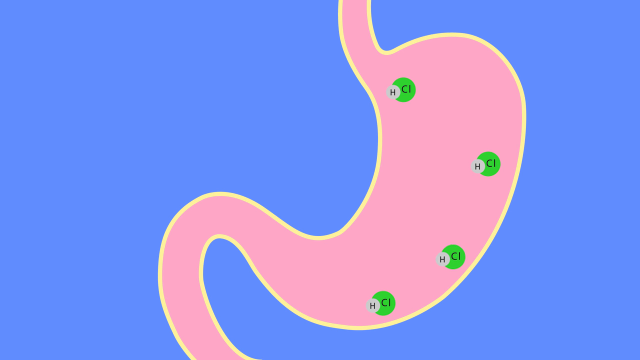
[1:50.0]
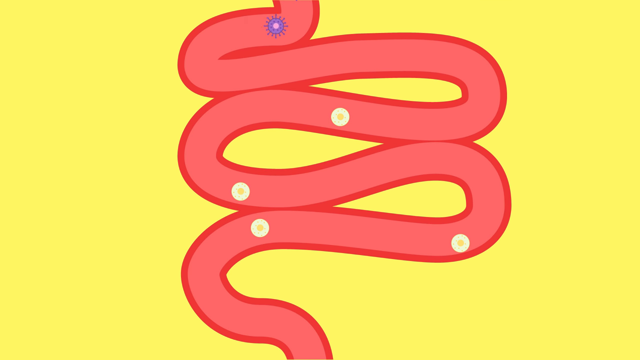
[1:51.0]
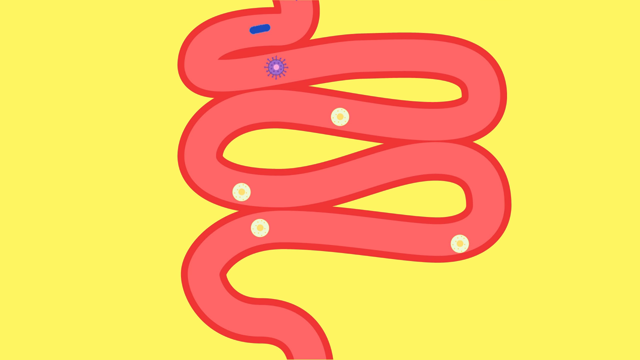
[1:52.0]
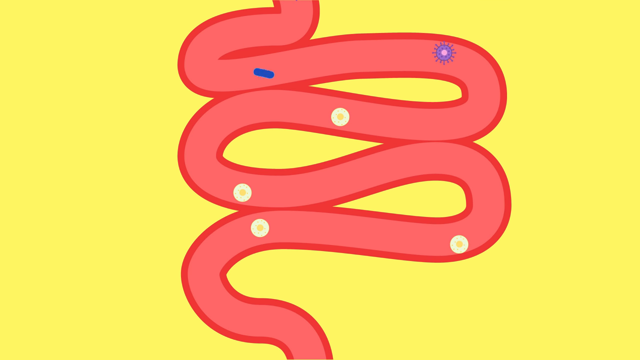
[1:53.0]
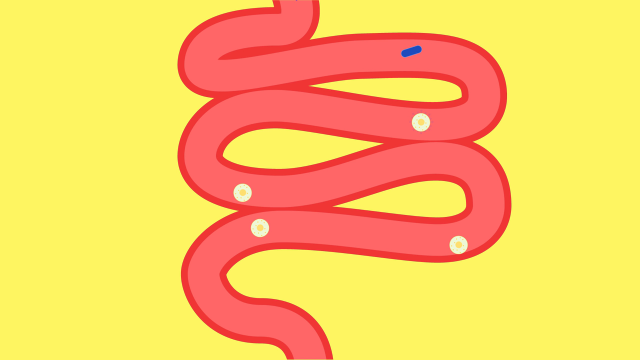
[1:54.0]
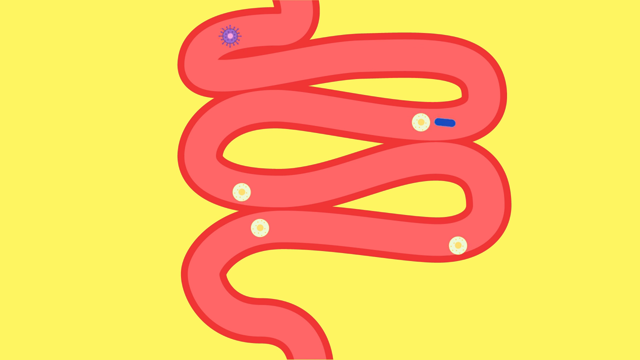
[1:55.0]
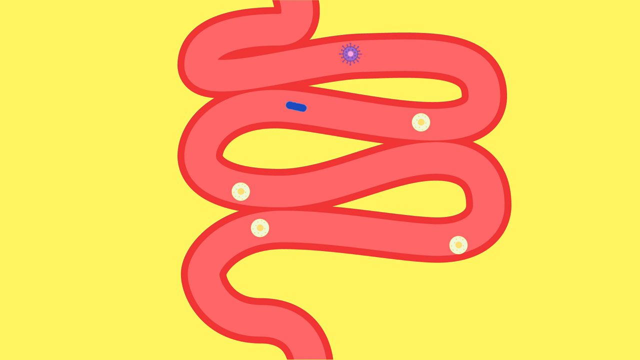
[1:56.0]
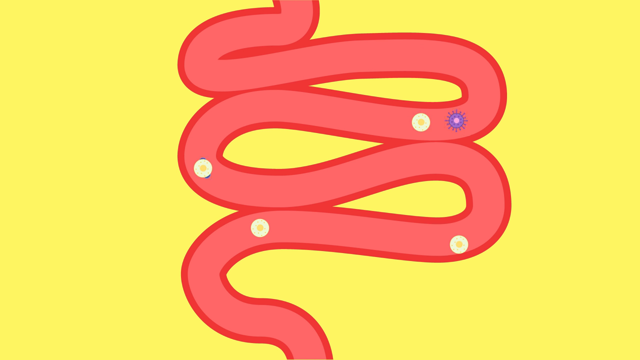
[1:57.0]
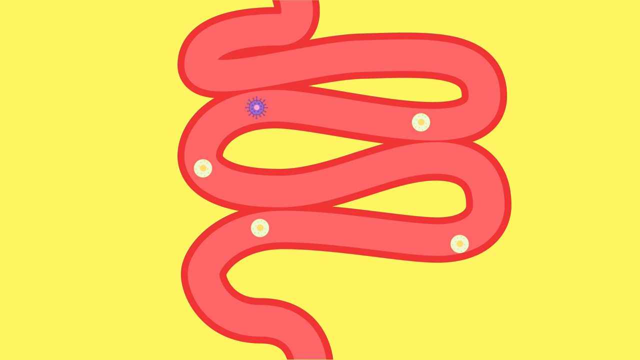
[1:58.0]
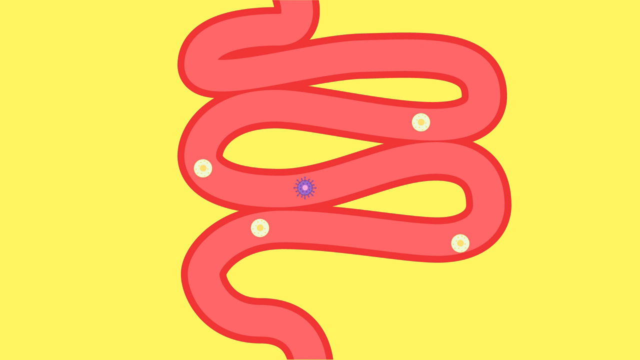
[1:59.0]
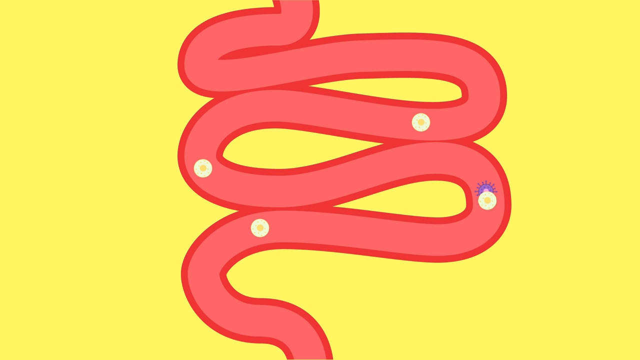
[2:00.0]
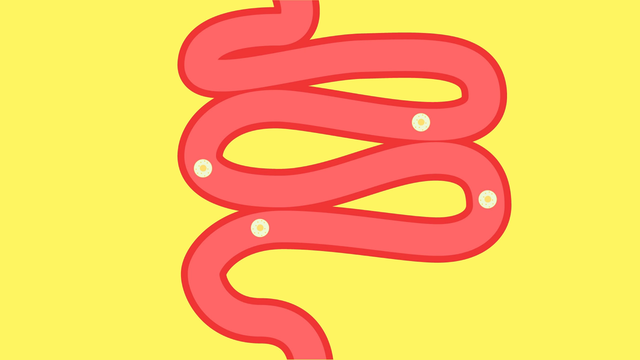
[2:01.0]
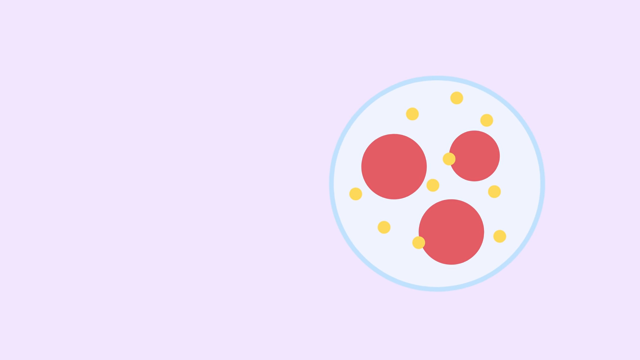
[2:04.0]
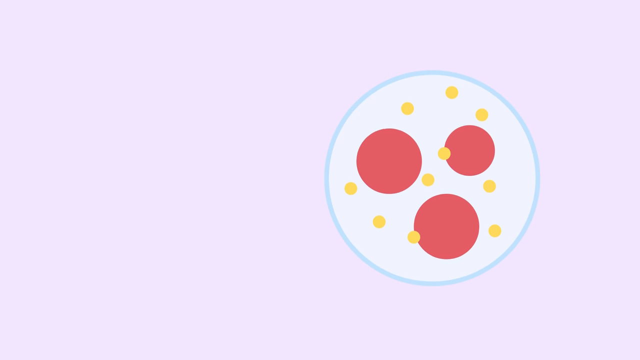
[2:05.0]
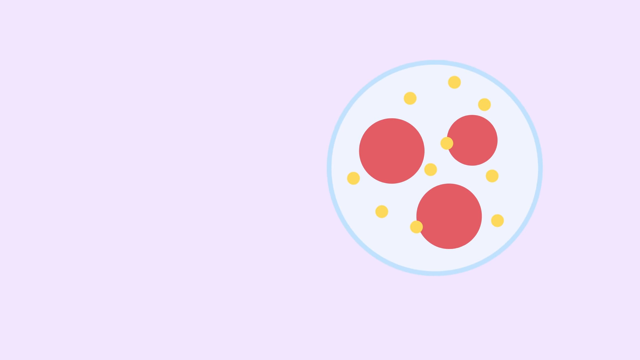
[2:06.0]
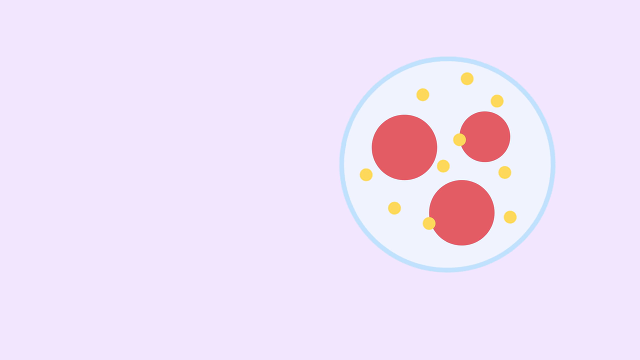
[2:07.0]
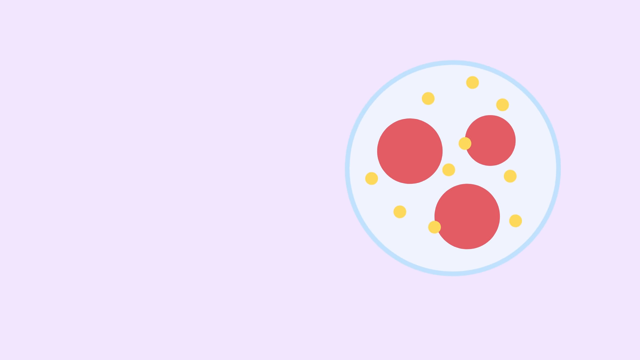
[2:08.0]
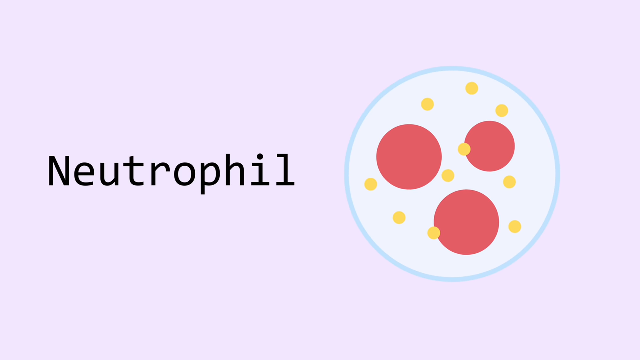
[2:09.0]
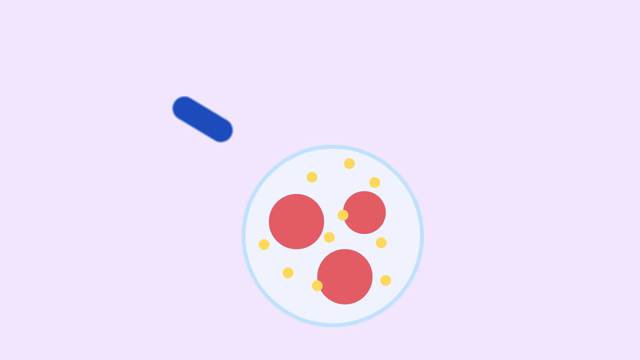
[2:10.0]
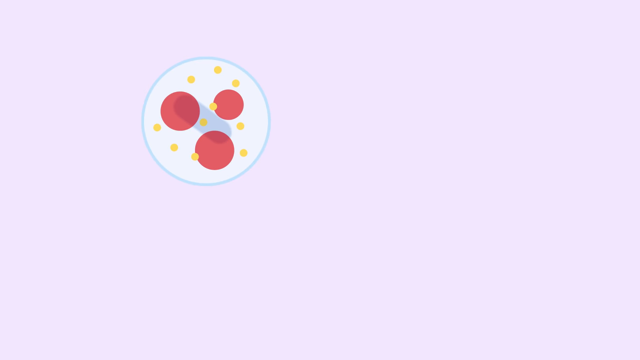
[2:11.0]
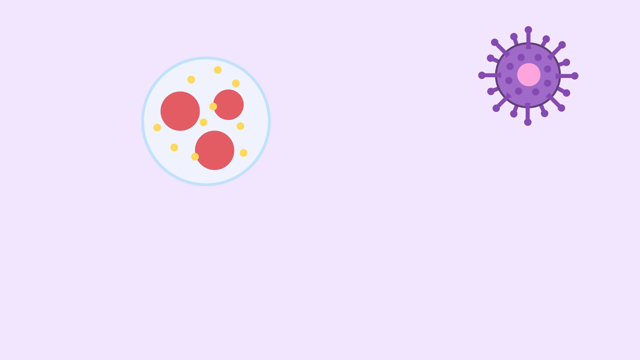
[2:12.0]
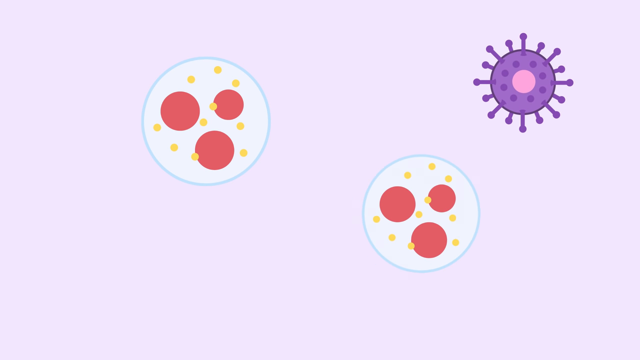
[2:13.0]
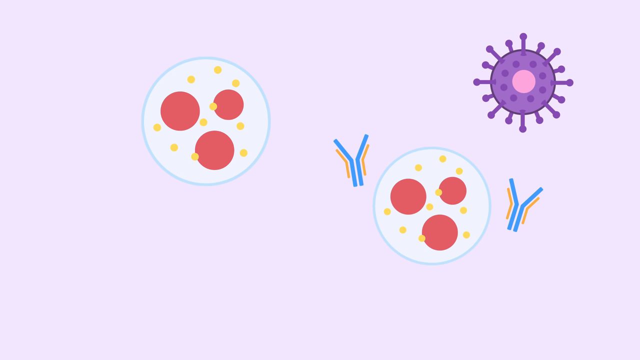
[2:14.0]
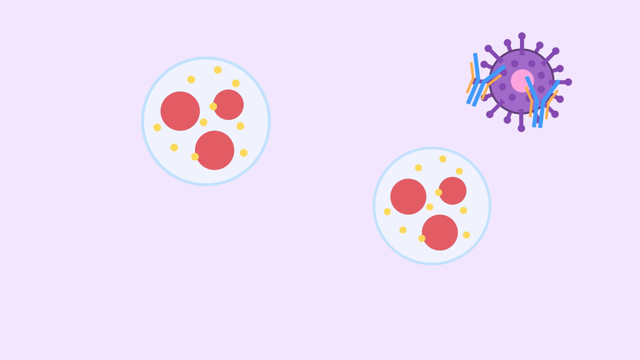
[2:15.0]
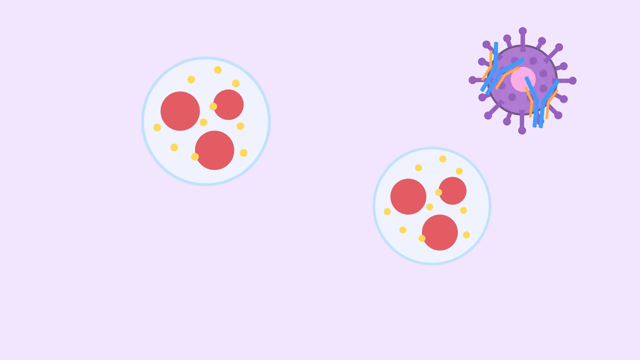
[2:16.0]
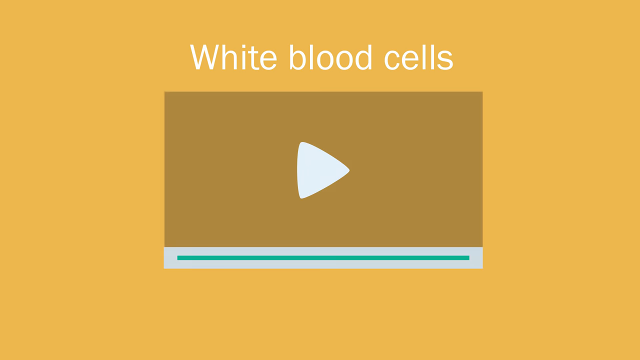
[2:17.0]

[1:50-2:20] The entire system is shown with red dots. White blood cells appear; there are many of them, with three of them shown along with a word.